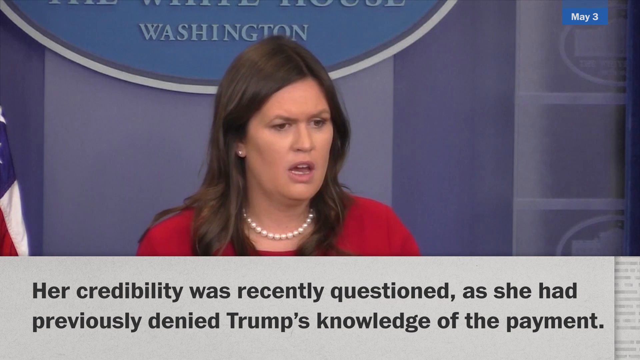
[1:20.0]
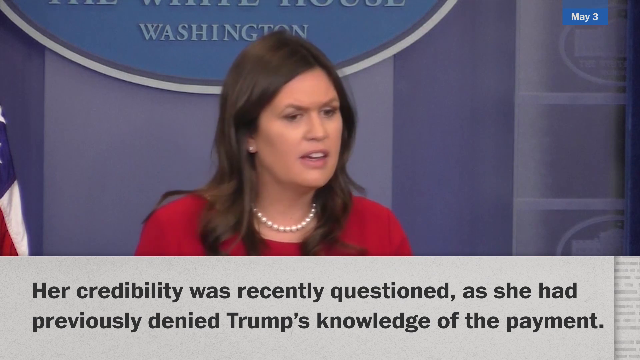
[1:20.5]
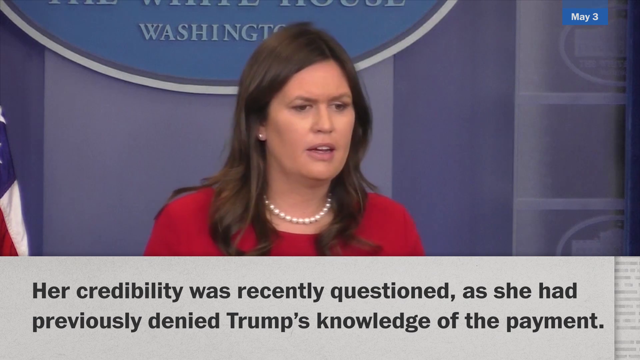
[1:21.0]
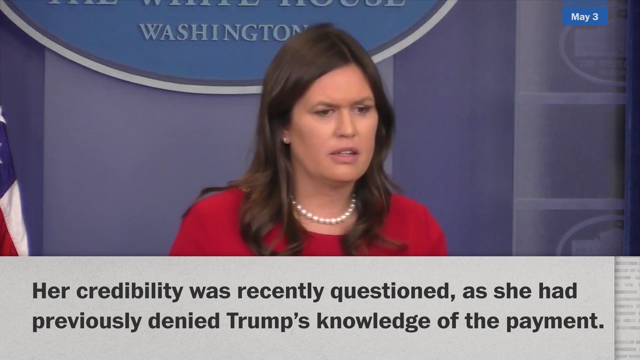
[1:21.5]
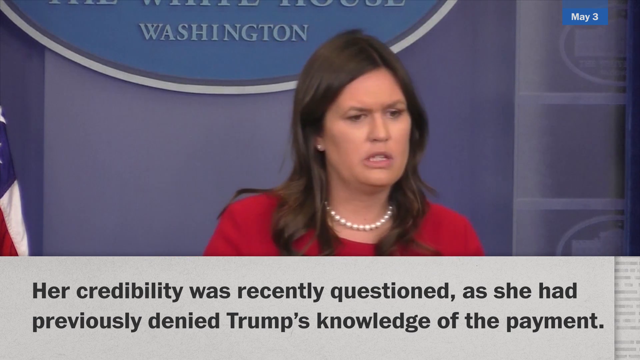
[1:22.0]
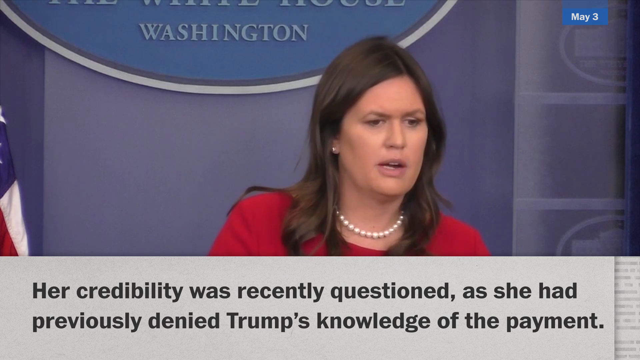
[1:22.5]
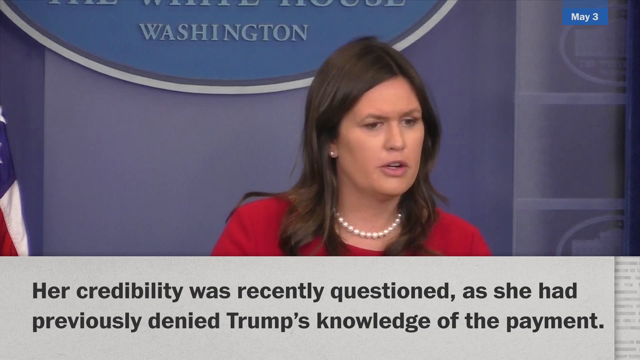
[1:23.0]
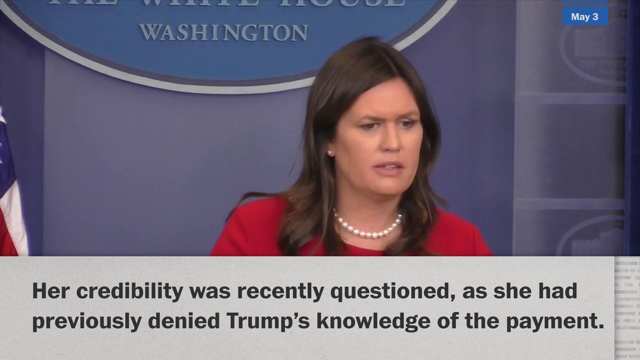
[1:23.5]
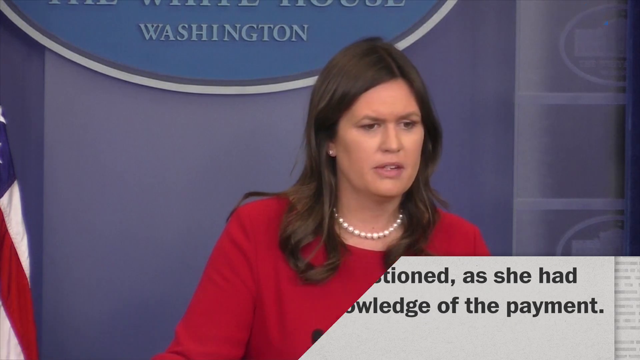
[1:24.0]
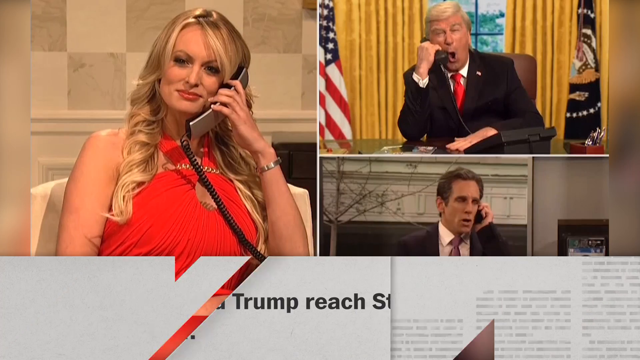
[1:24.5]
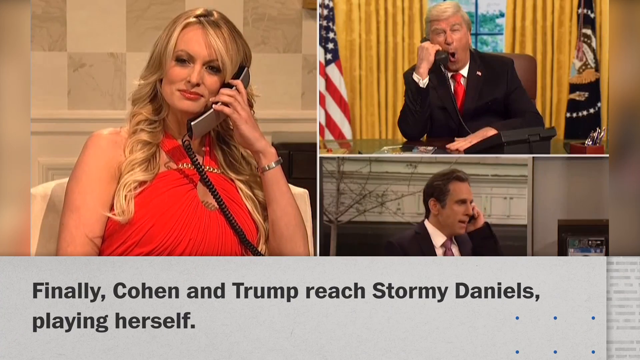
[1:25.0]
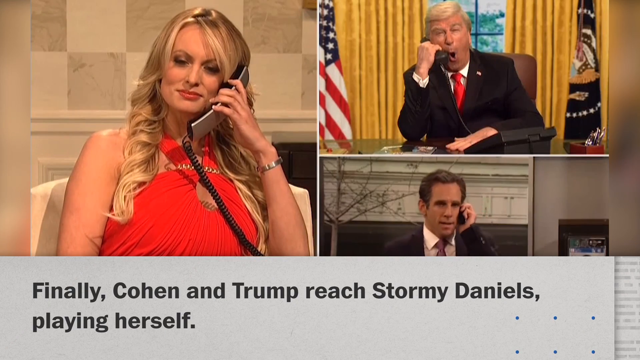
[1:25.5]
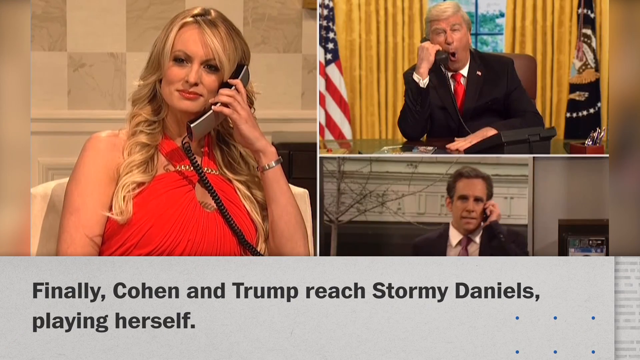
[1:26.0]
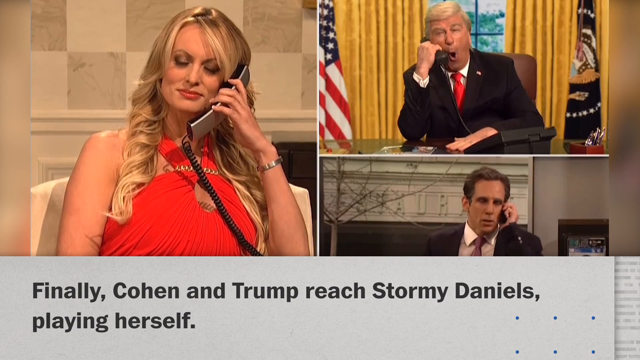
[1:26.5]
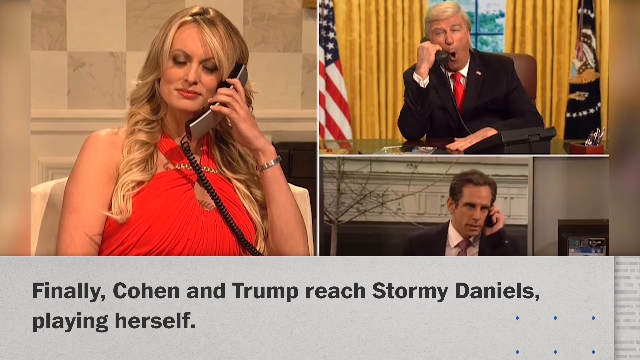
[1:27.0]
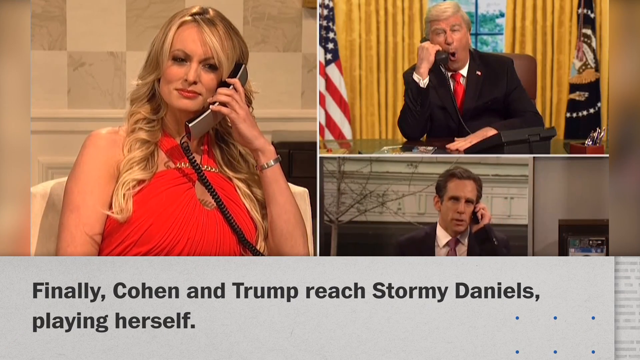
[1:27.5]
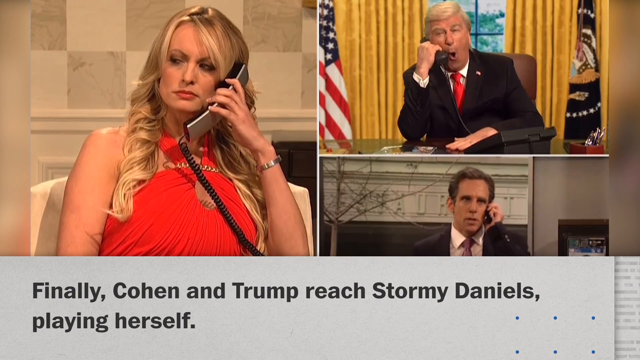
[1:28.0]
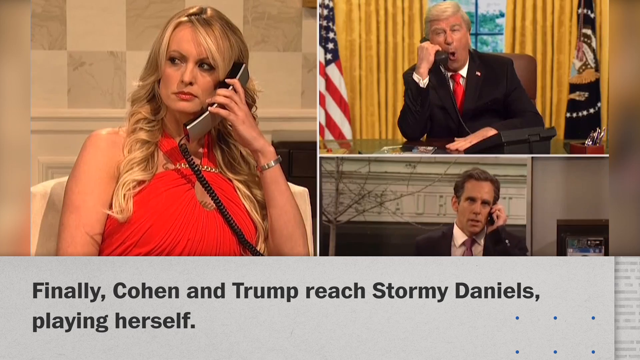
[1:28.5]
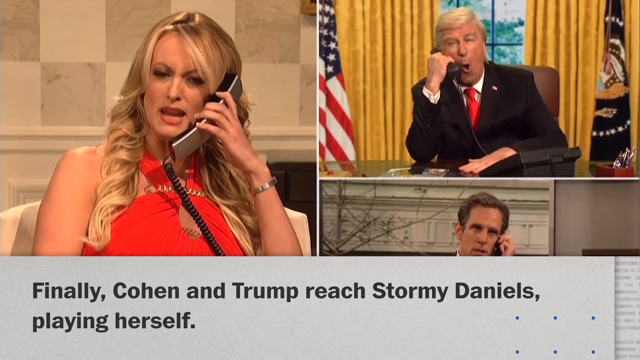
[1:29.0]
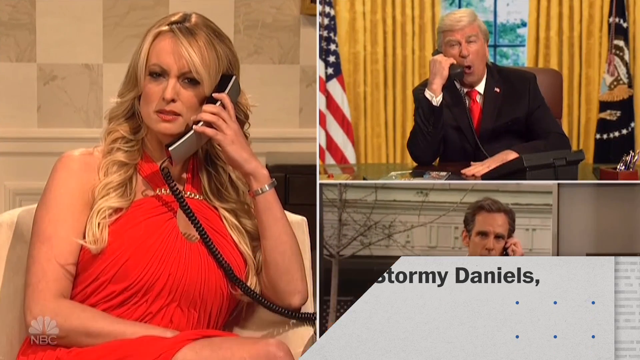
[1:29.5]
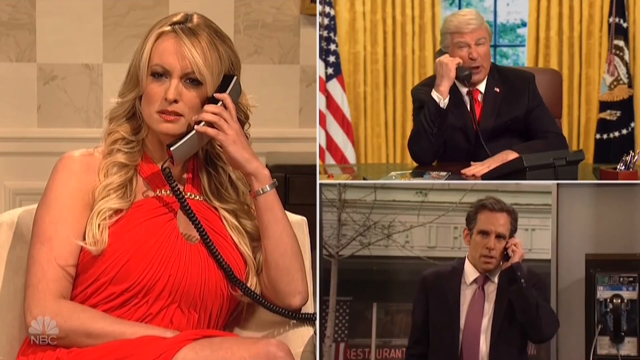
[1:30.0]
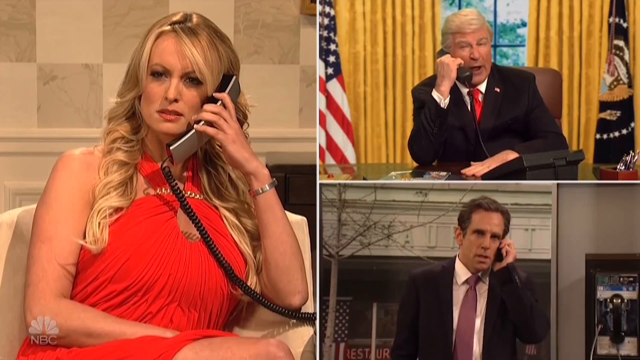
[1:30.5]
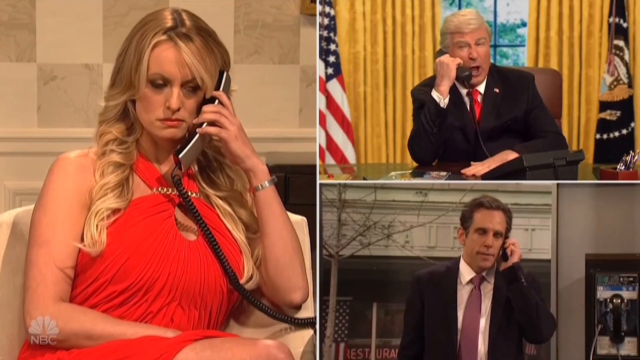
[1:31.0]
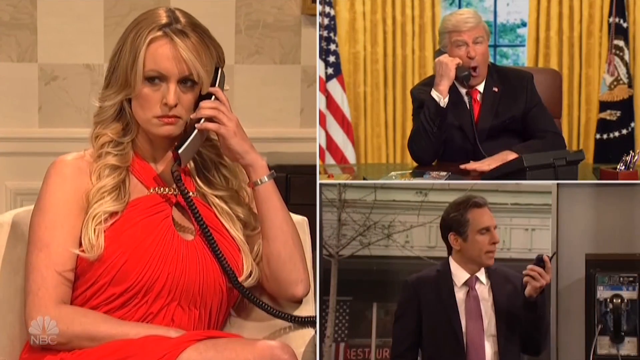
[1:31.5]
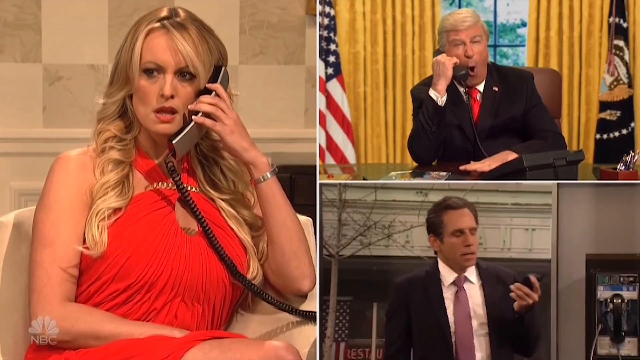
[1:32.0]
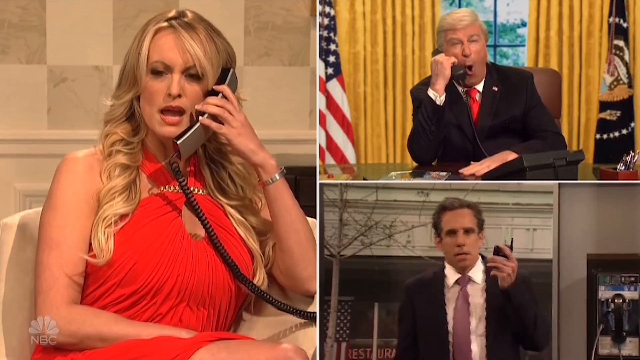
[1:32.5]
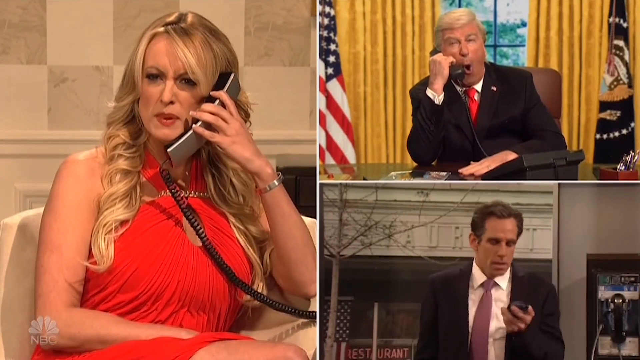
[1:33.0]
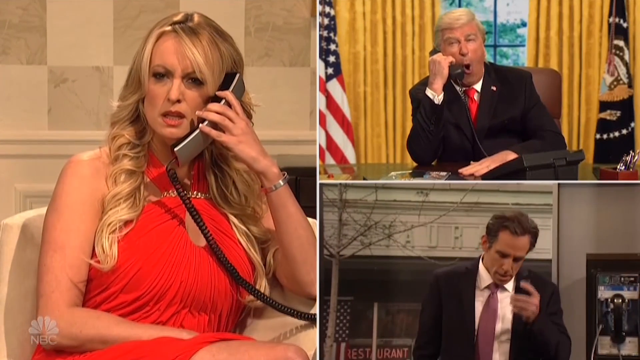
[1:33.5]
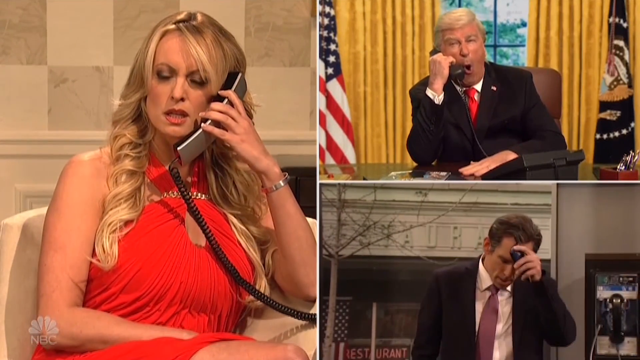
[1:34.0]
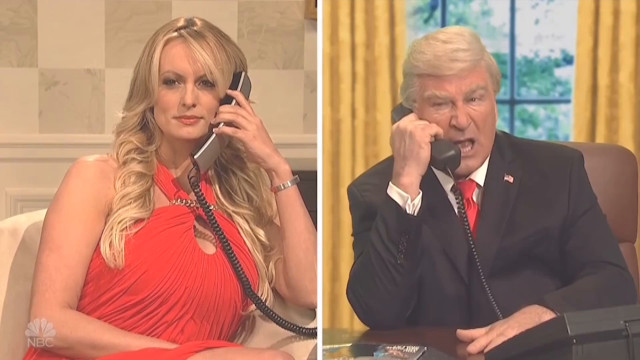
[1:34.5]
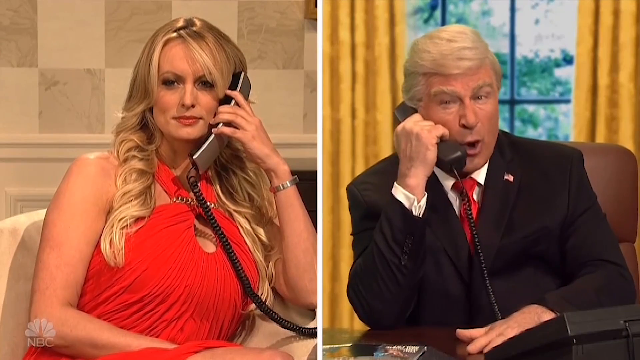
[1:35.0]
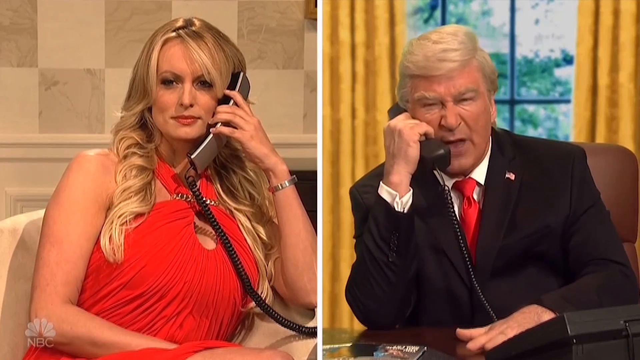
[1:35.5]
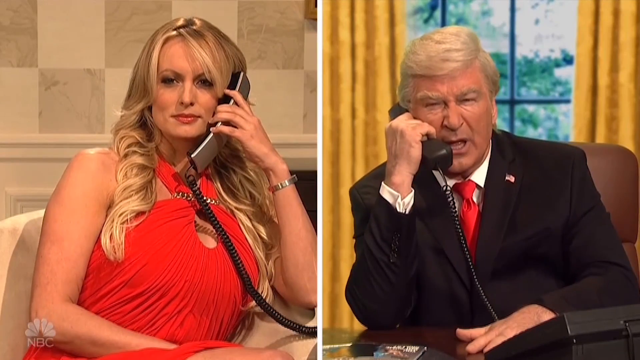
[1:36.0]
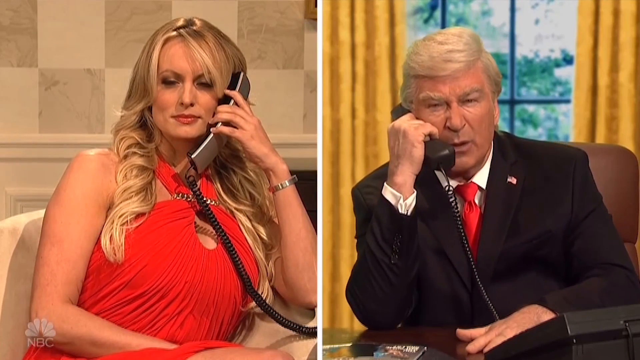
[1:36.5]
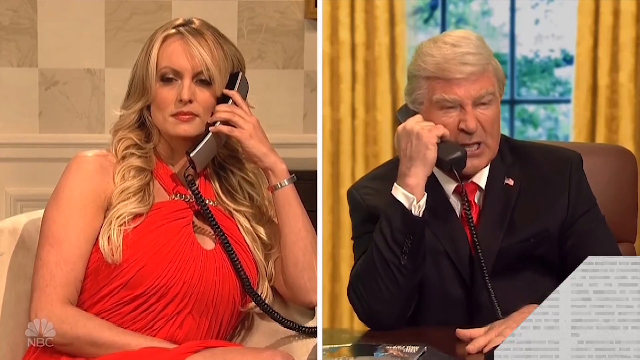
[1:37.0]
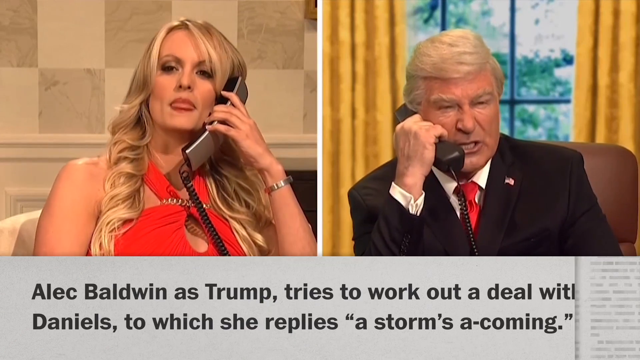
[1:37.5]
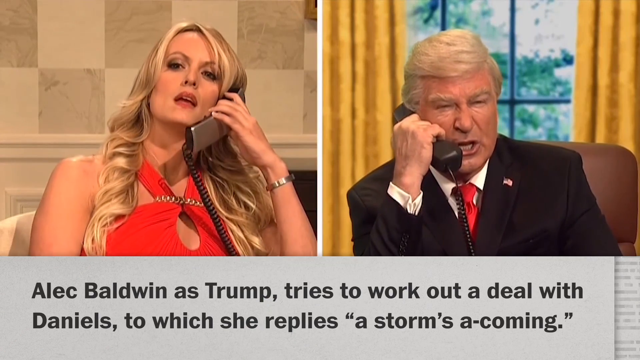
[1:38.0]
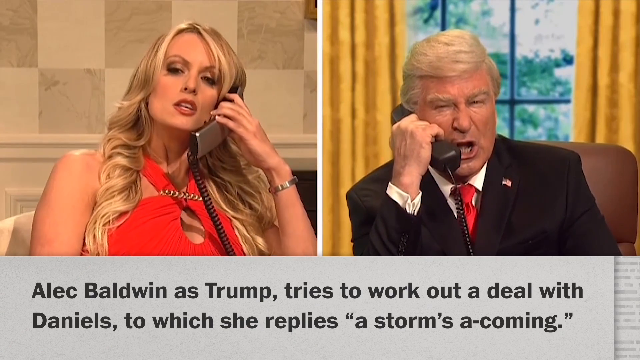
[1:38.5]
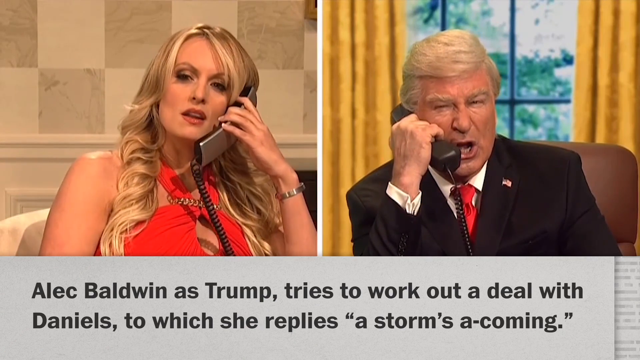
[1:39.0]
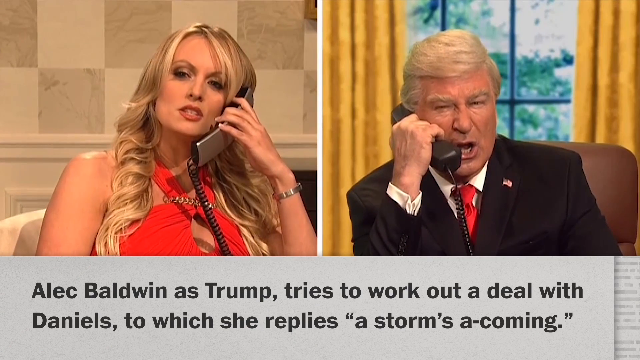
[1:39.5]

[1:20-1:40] Sarah Huckabee Sanders appears in a real interview in Washington, wearing a red dress and pearls. A split screen follows, in which what looks like the real Stormy Daniels, in a red dress, talks to Trump, played by Alec Baldwin, with Michael Cohen on the bottom, so the screen is split three ways and all are speaking on phones. Michael Cohen takes the phone away from his ear and hits it onto his forehead in a frustrated manner. Stormy Daniels continues speaking to Trump, who is very animated and wears a red tie. Alec Baldwin appears to be sitting in what represents the Oval Office, with gold curtains behind him and a flag on each side. Stormy Daniels seems to be the real person rather than an actress.